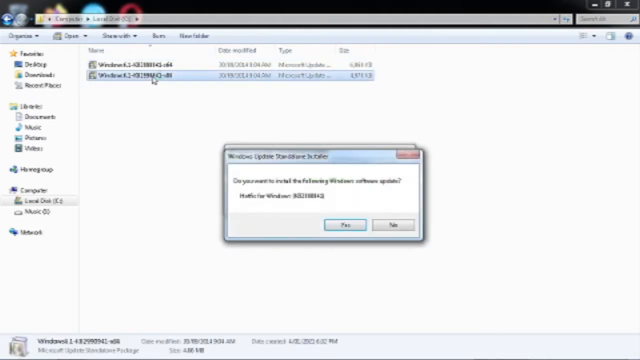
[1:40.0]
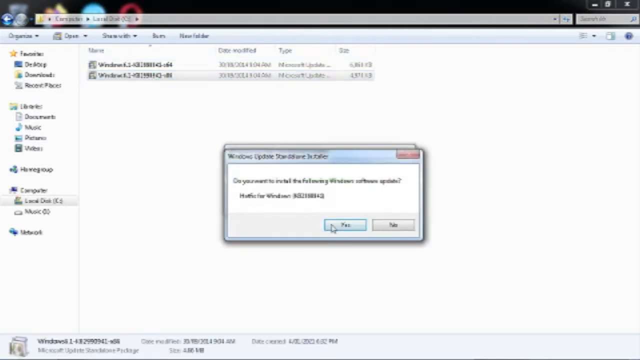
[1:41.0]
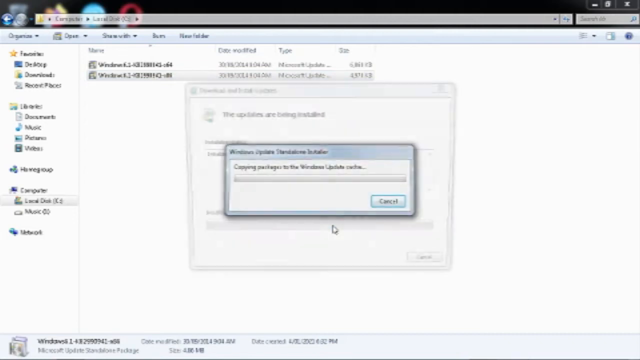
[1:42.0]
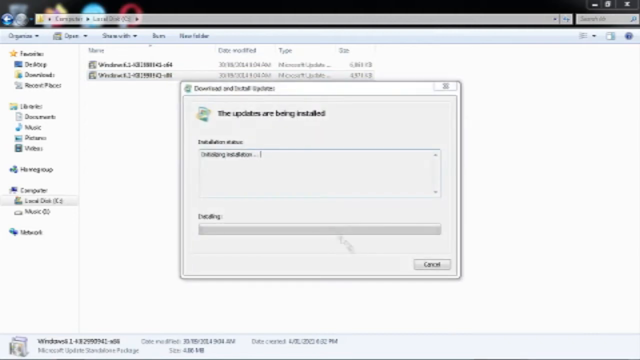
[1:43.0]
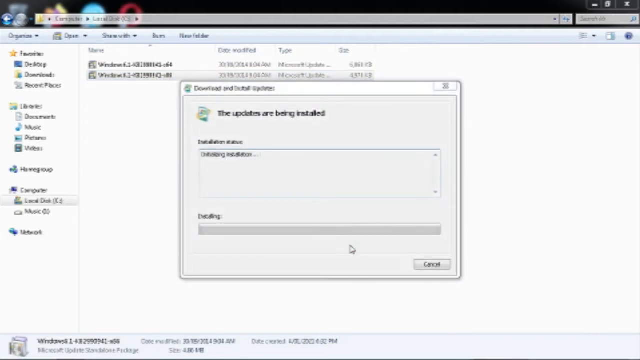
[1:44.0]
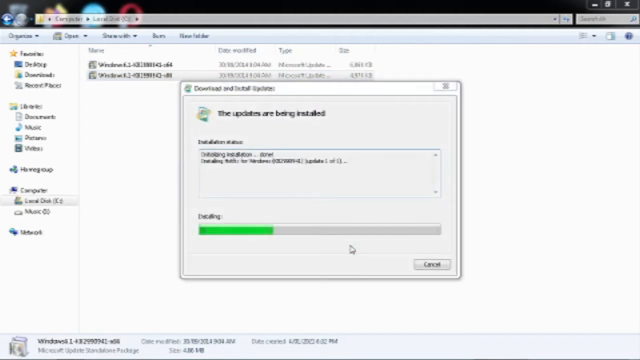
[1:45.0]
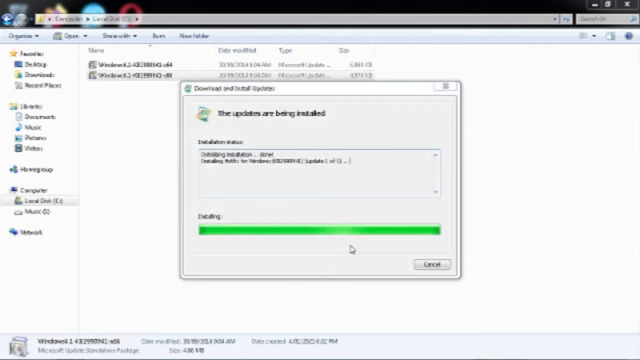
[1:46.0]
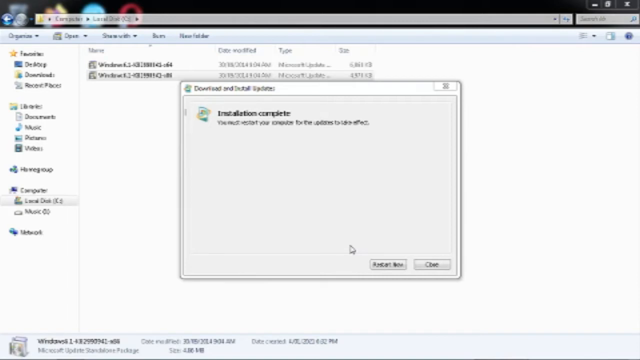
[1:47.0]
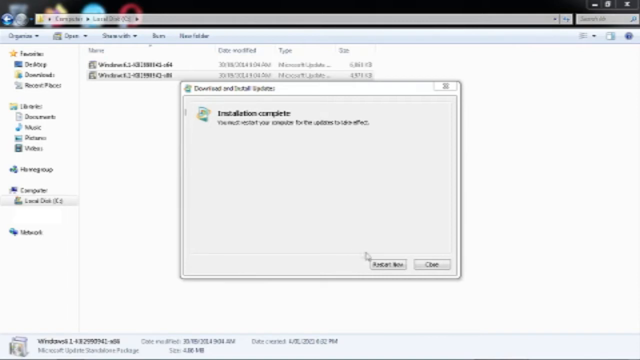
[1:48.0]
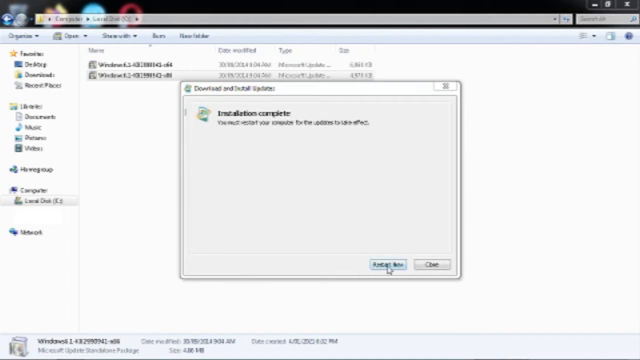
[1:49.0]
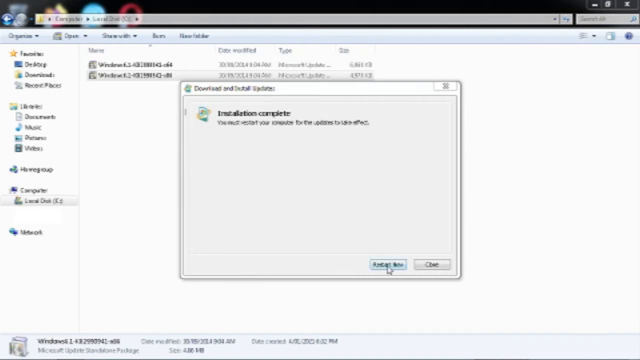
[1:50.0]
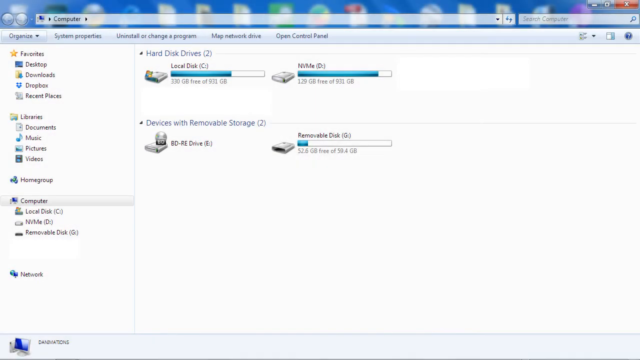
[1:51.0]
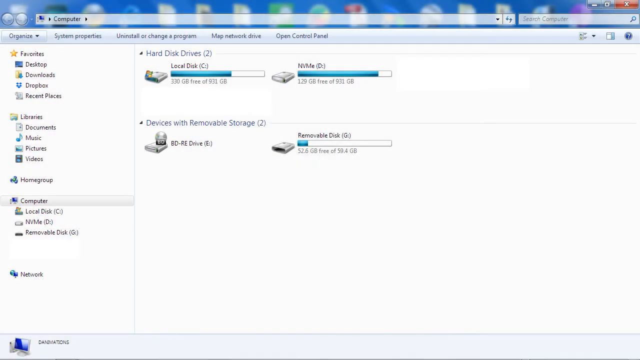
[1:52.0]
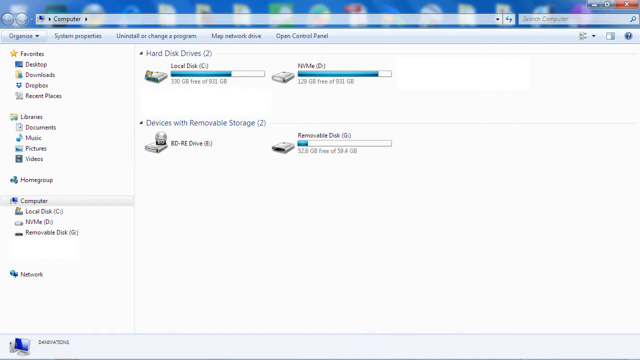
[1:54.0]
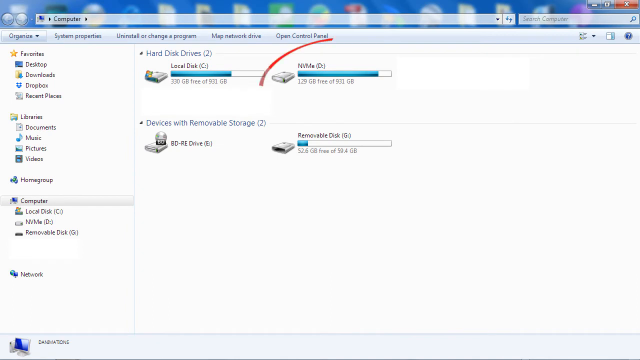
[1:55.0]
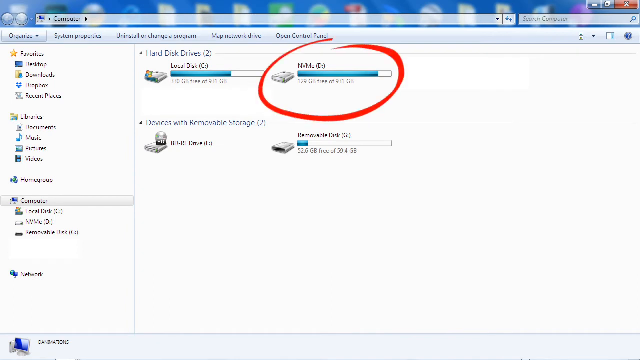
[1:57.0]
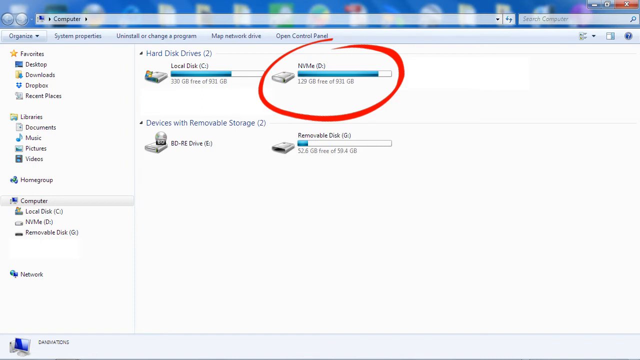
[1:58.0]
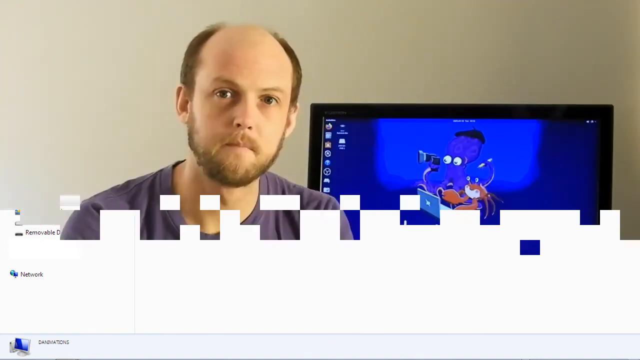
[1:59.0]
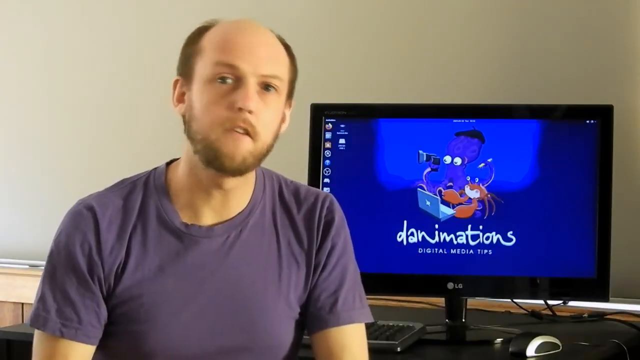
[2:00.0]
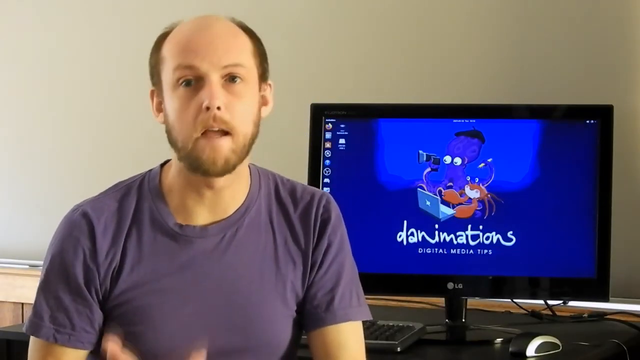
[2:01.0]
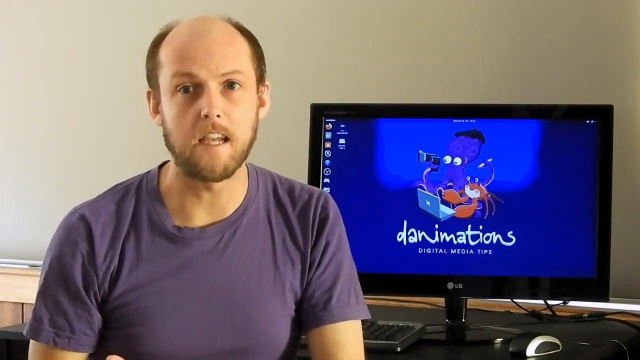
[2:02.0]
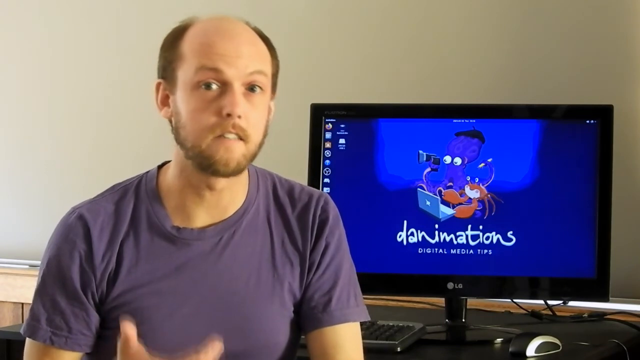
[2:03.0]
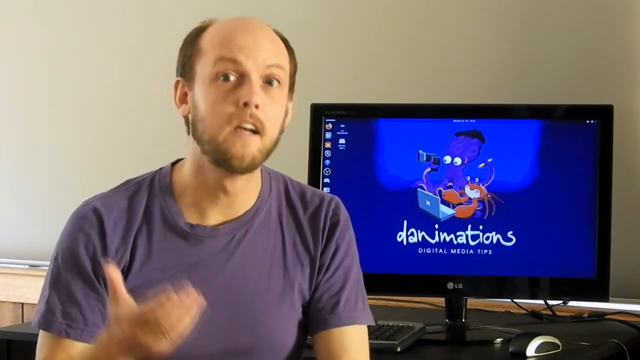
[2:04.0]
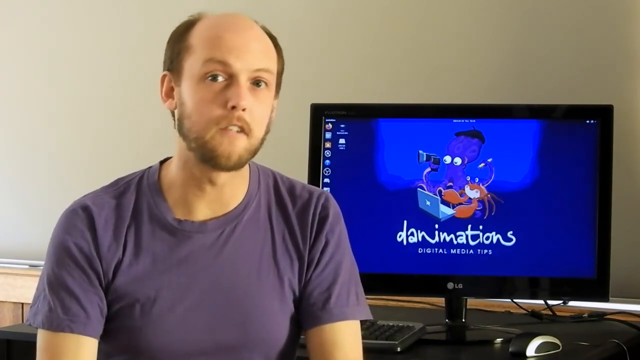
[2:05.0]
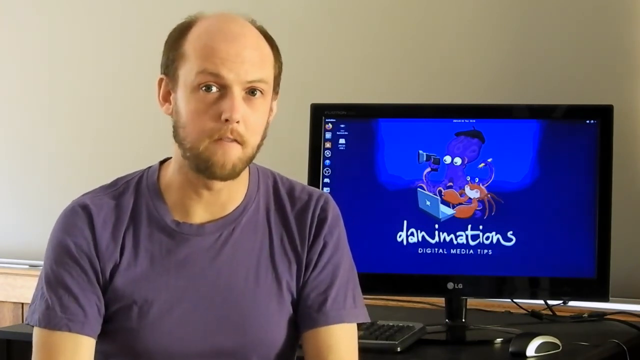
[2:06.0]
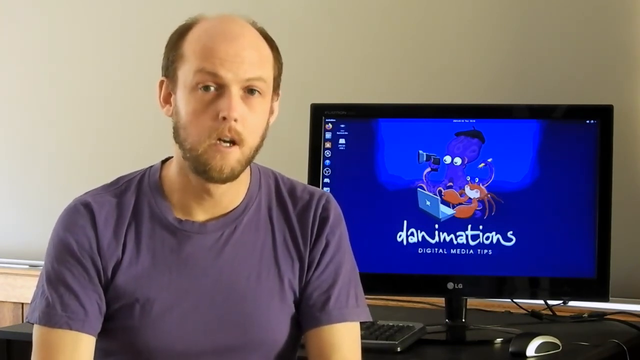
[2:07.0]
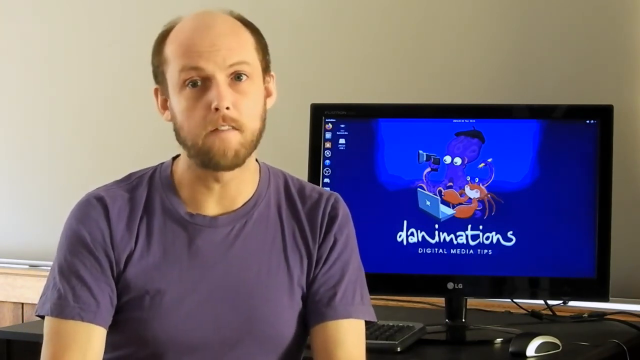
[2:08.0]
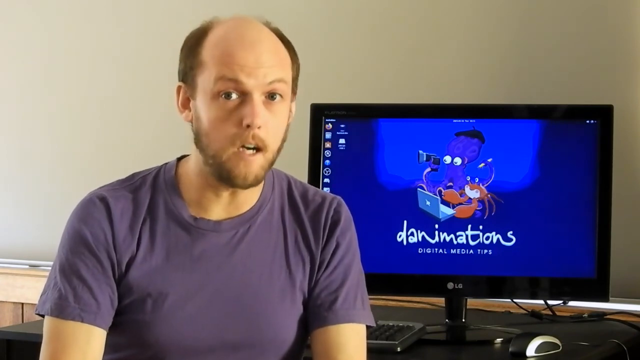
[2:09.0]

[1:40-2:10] A desktop is shown. At the very top, a Windows navigation or Explorer window is open; it appears a folder has been navigated into, and an item in the folder seems to be opened. A window pops up for Windows Update asking whether to update, and he clicks yes. A progress bar appears for less than a second, followed by a download and install updates window with the text "progress" in the middle and an install progress bar at the bottom. It quickly finishes, and he clicks restart now. The view then shows the computer directory in Internet Explorer, where the D drive, an NVMe SSD, is visible. A red circle comes out and circles the D drive to point it out, then fades away. A man in a purple shirt then talks on the left, with the computer monitor in the background.